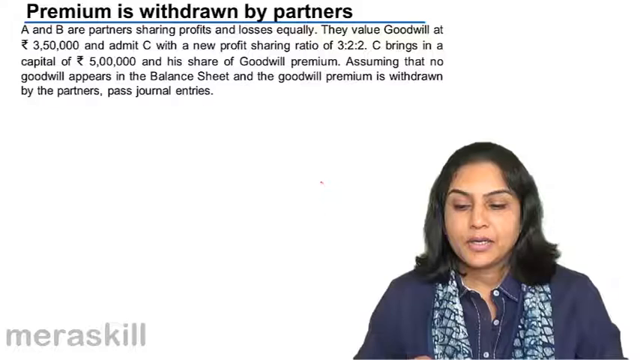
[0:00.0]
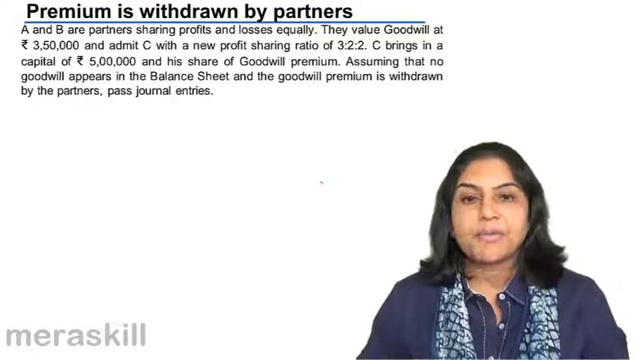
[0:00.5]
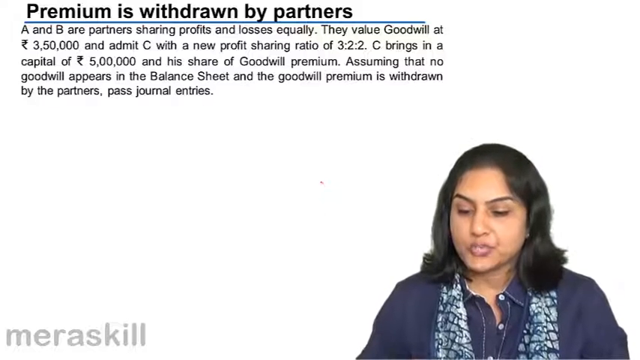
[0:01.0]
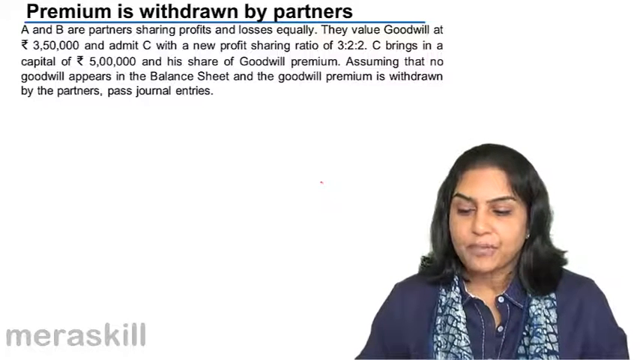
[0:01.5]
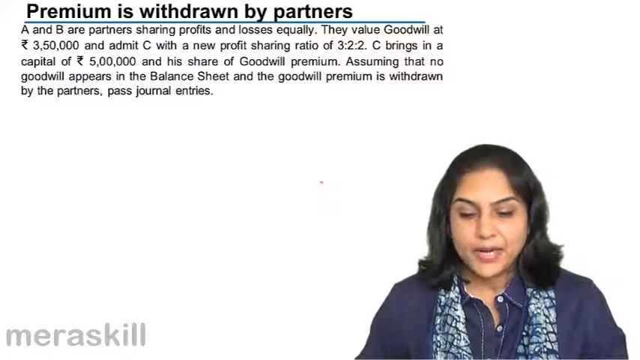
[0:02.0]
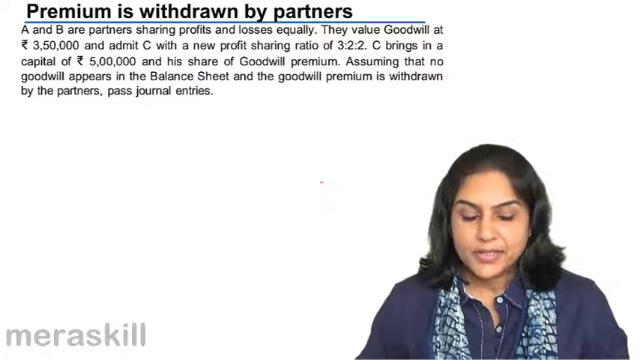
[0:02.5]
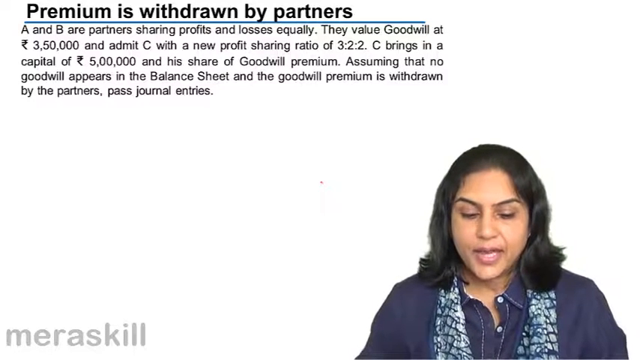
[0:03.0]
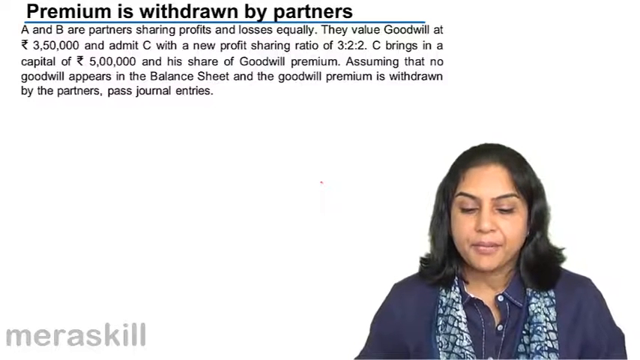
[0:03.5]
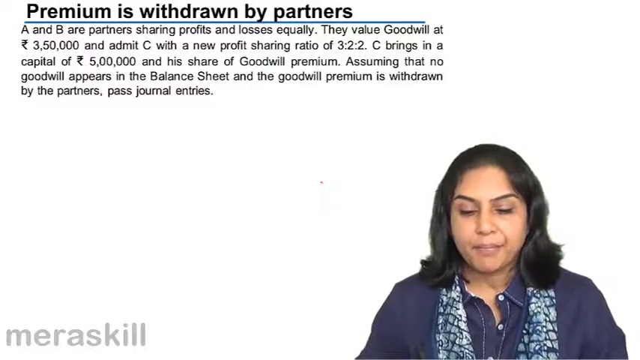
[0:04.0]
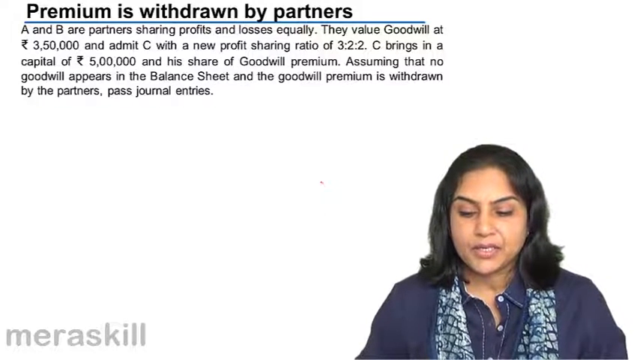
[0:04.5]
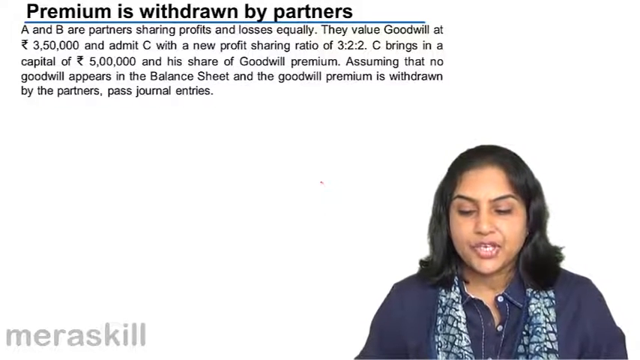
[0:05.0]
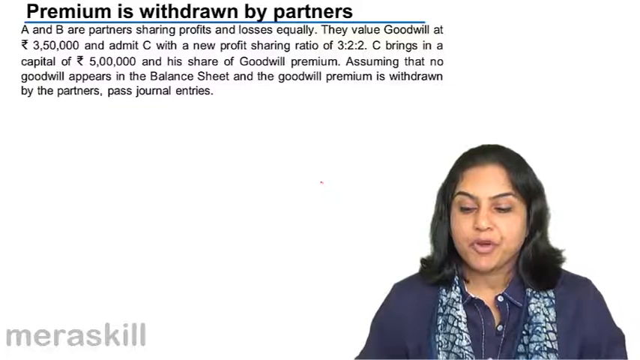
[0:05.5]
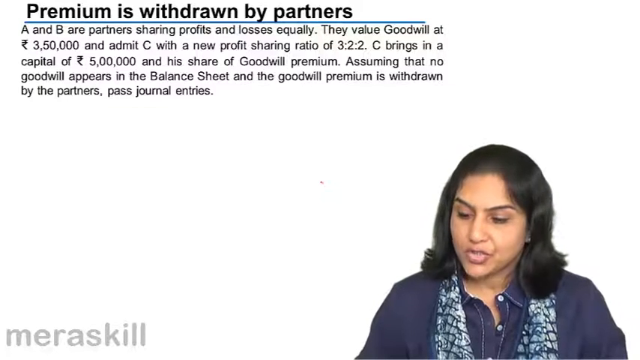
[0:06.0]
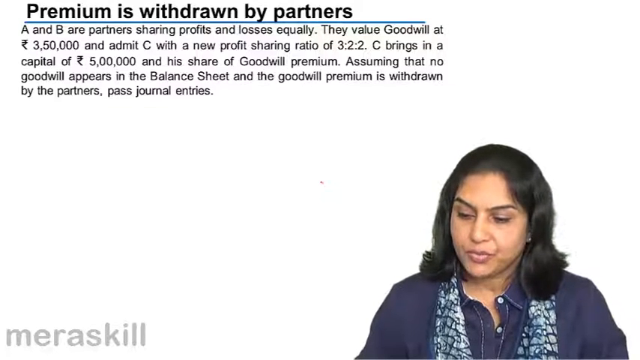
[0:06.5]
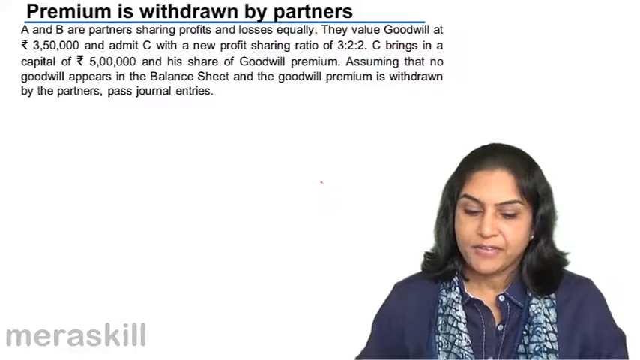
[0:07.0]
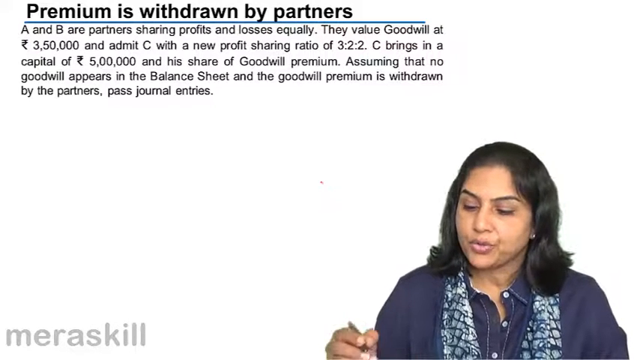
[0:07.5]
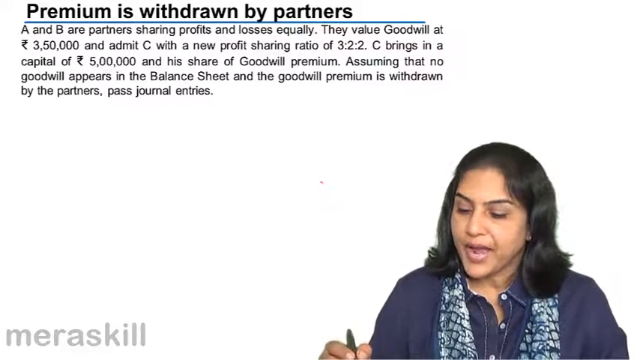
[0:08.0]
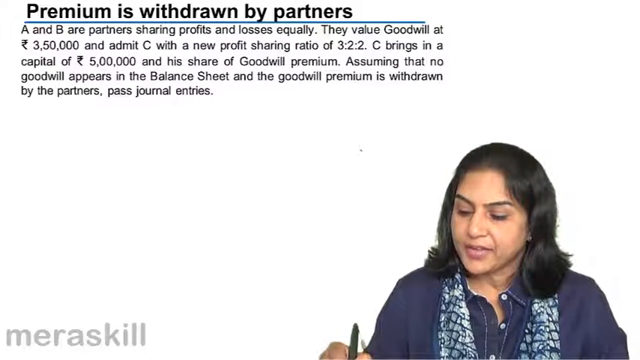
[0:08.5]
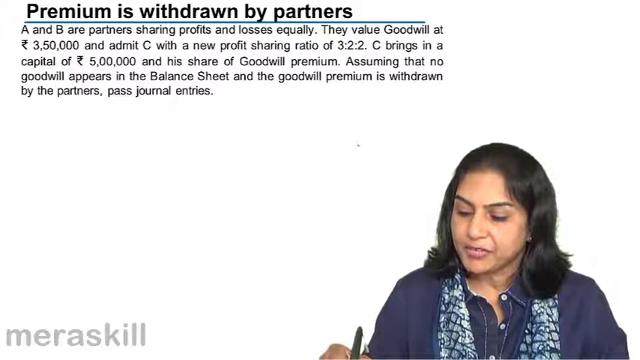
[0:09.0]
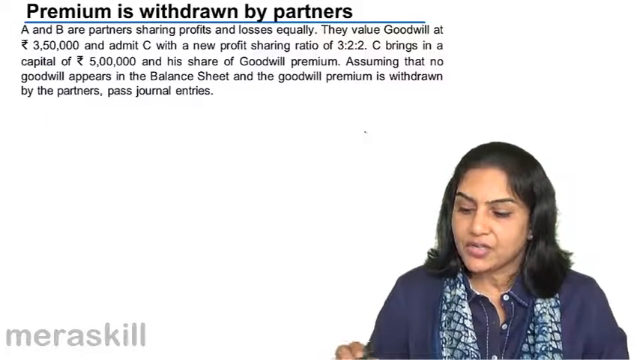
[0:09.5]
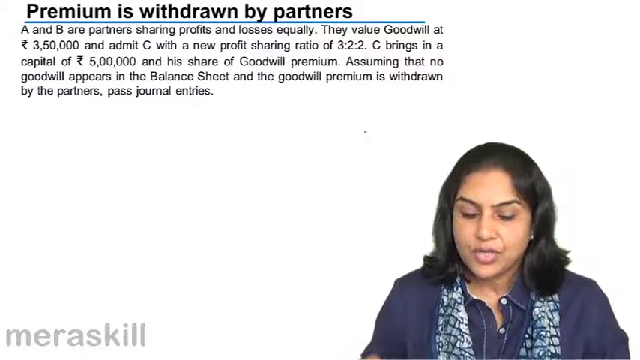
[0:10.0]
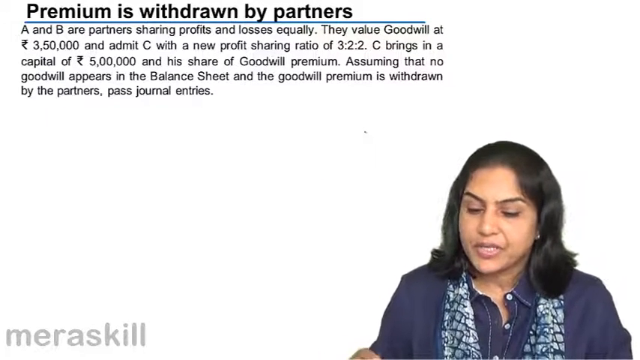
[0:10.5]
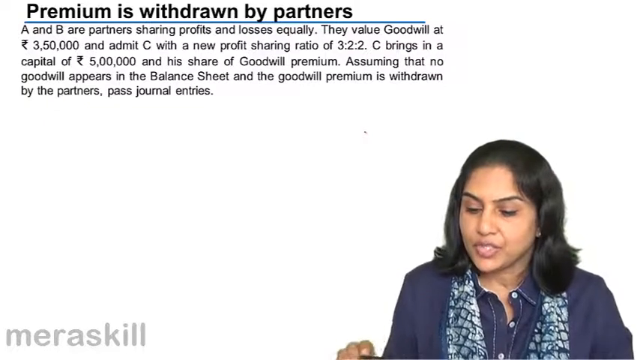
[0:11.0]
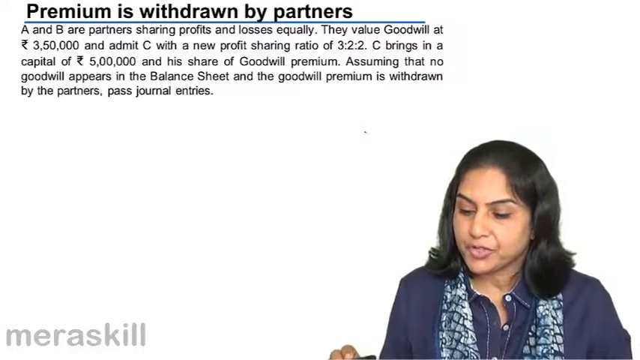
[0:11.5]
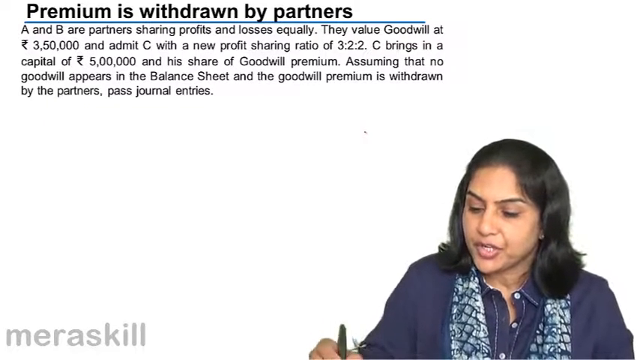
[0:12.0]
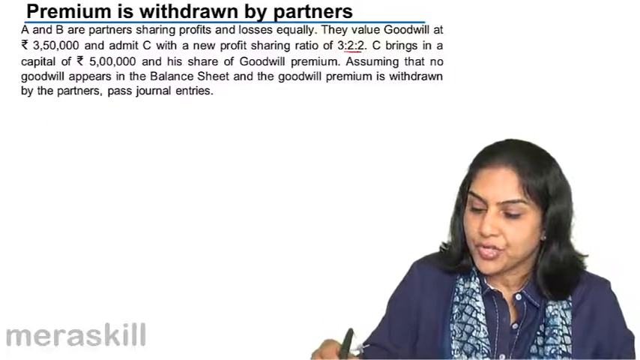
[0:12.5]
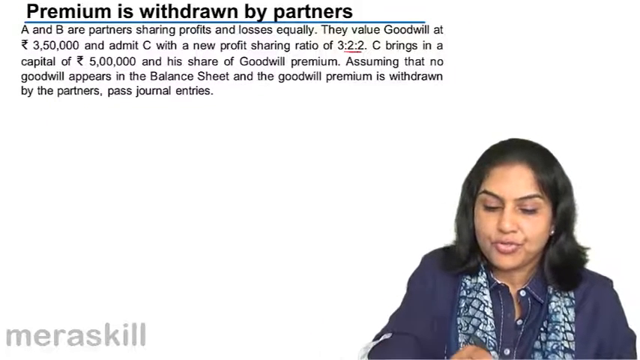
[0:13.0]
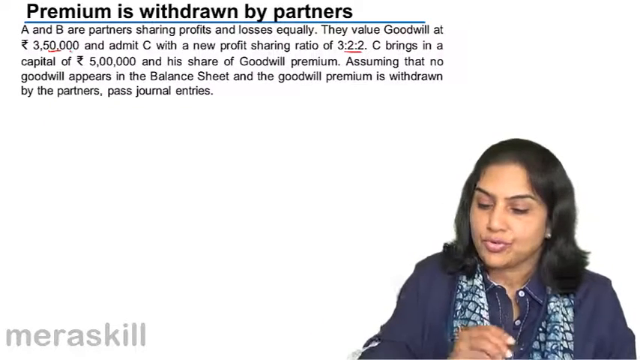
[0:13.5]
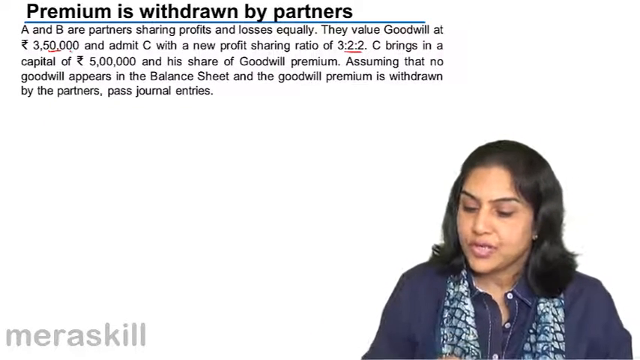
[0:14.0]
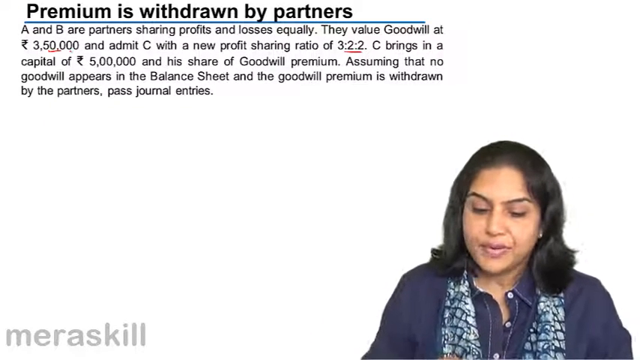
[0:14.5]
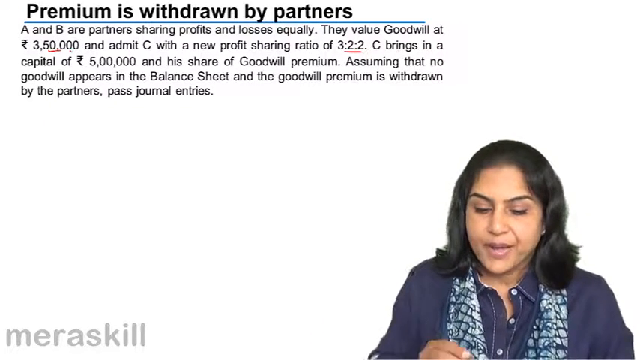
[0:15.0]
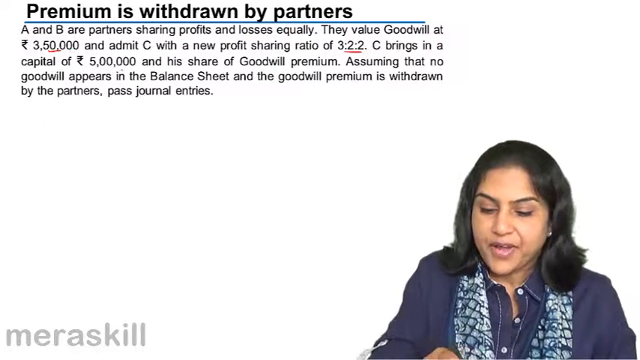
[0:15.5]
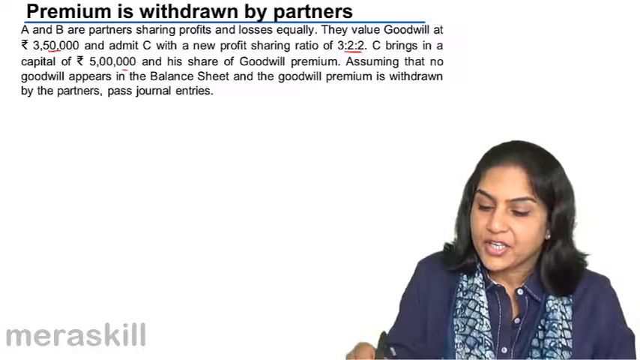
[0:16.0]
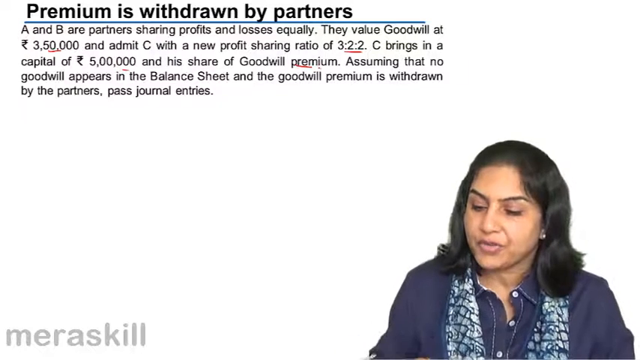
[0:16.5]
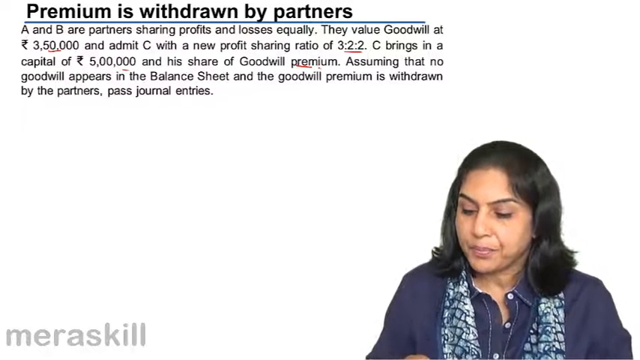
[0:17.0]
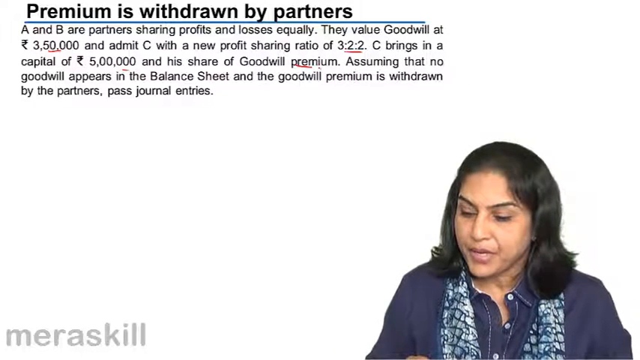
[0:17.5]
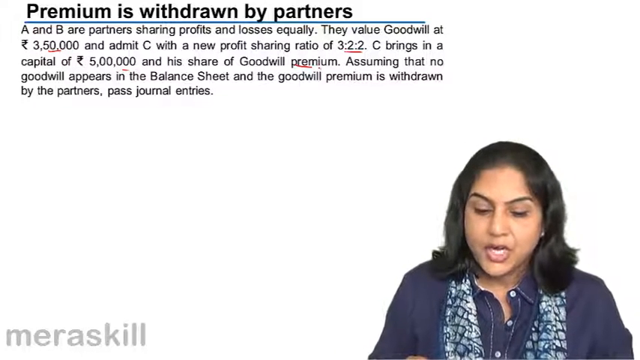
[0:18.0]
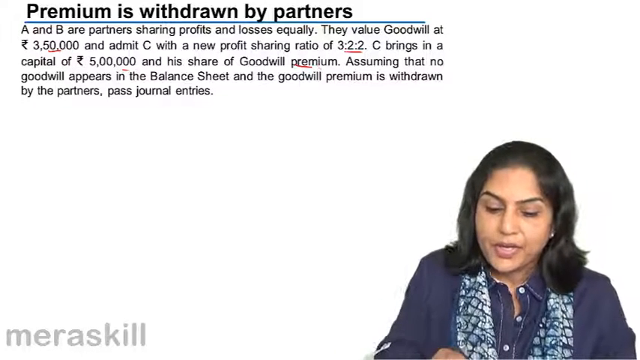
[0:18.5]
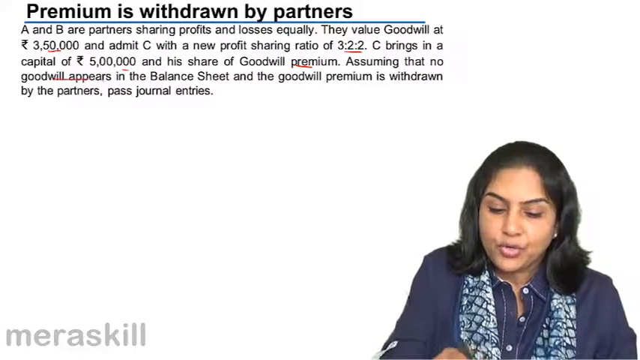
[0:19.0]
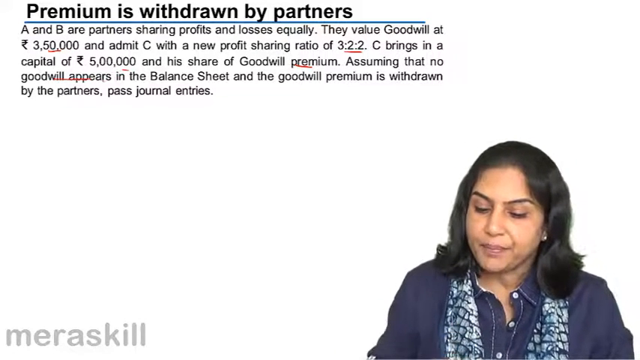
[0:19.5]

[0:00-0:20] On a white background, a title appears at the top with some text underneath it. In the bottom right corner is a woman wearing a blue top, apparently a blue dress shirt, with a silver scarf that has blue or black stripes on it. In the bottom left corner, text reads "MeraSkill." The title says "Premium is withdrawn by partners." The woman periodically looks down and then back up while speaking, and she appears to be reading something off a paper or a device in front of her. She then looks down and keeps looking down as she raises her right hand, which holds a pen. She holds the pen so it can be seen, then her hand disappears. She raises her hand again with the pen visible and writes something down, the hand and pen moving together.